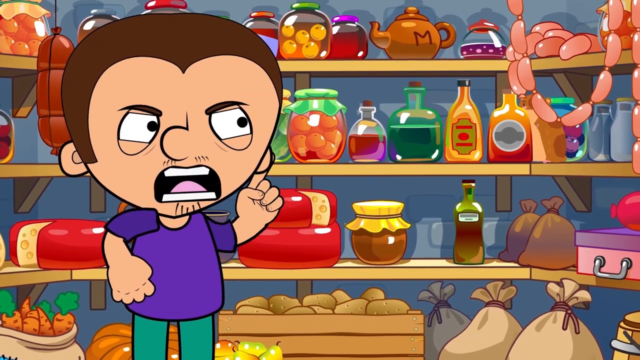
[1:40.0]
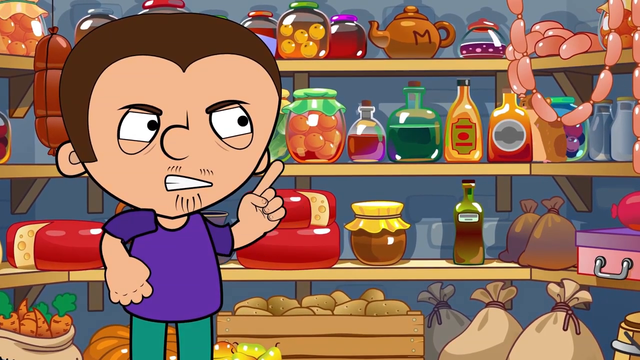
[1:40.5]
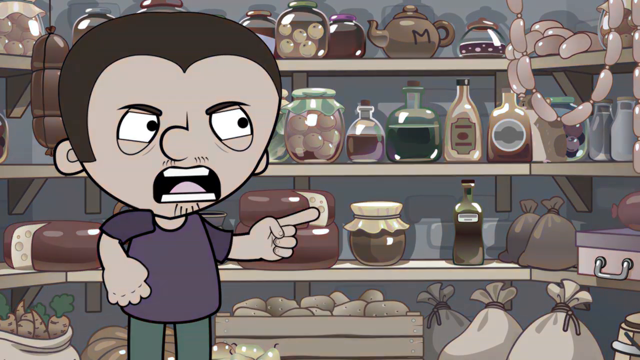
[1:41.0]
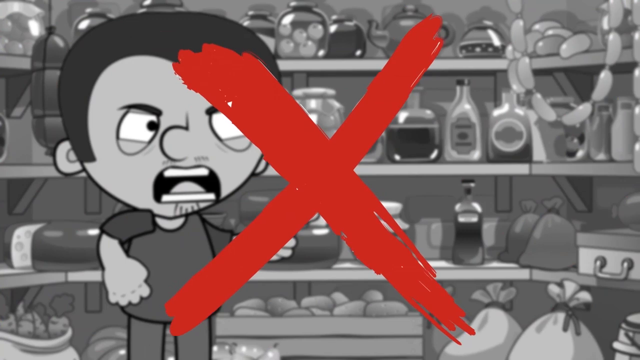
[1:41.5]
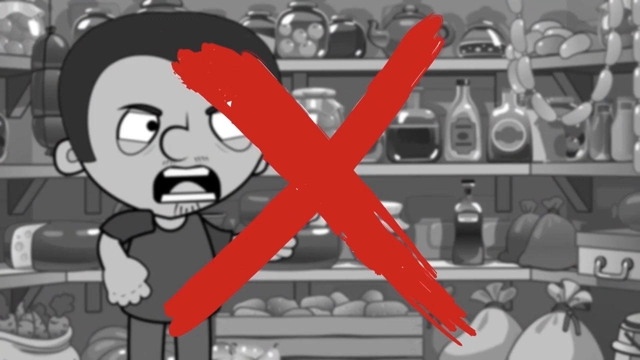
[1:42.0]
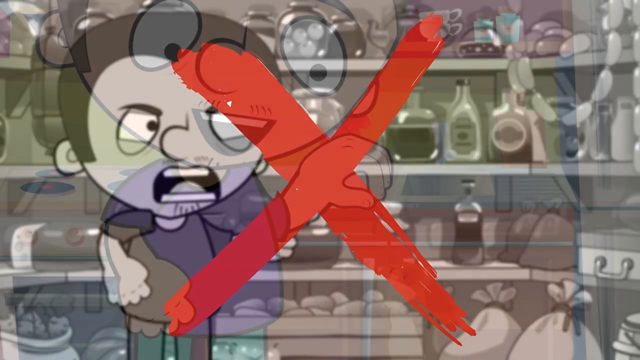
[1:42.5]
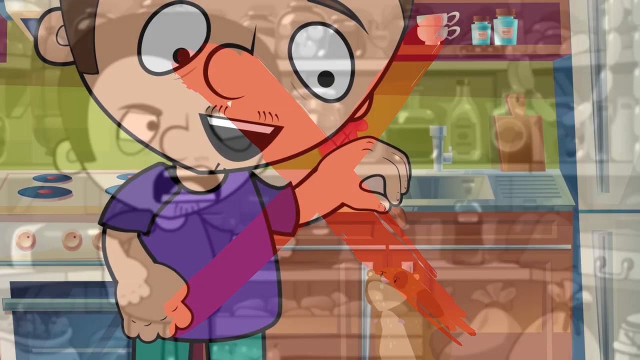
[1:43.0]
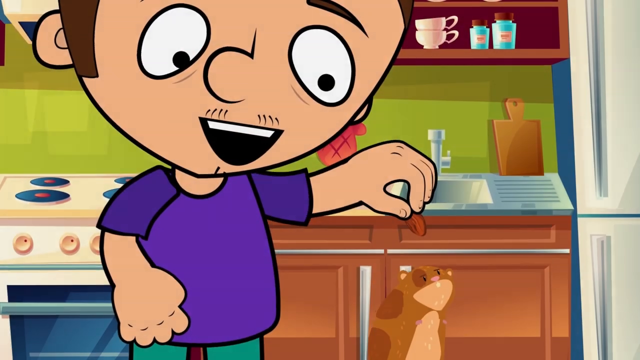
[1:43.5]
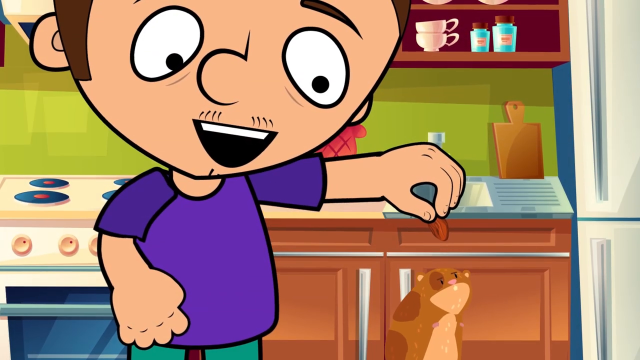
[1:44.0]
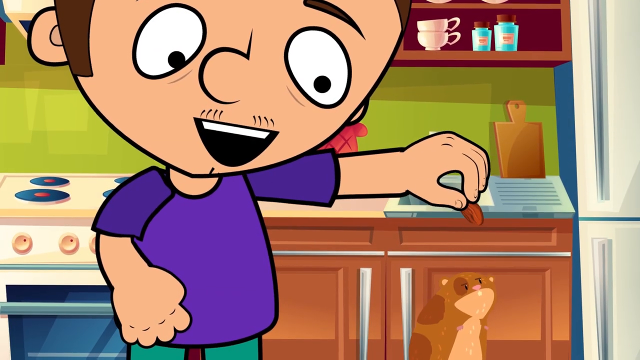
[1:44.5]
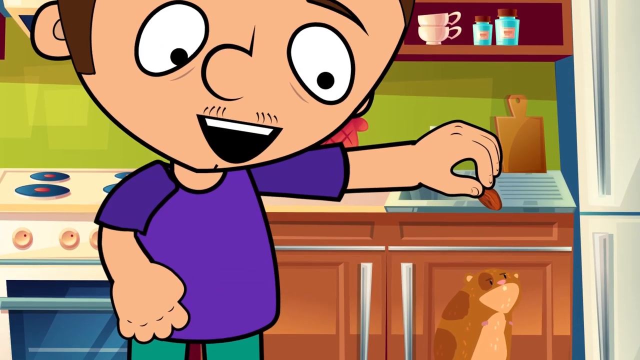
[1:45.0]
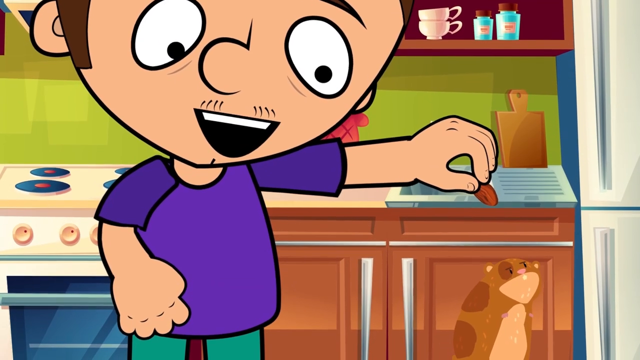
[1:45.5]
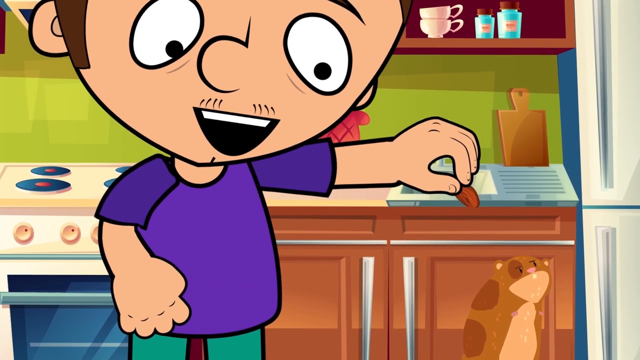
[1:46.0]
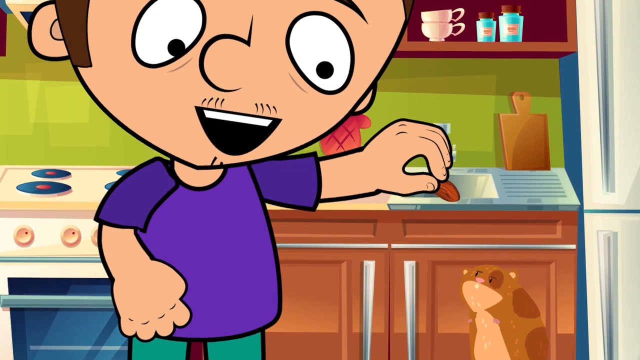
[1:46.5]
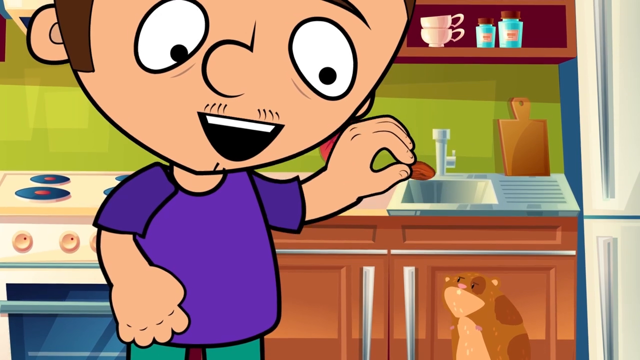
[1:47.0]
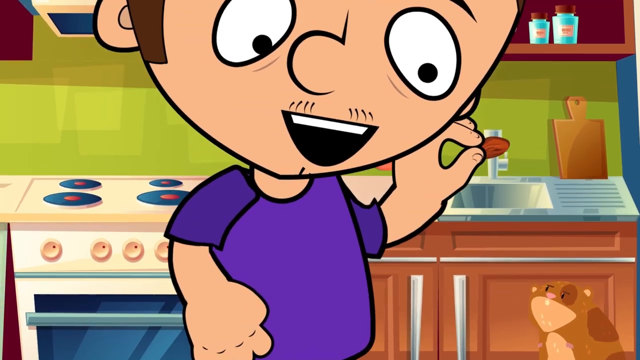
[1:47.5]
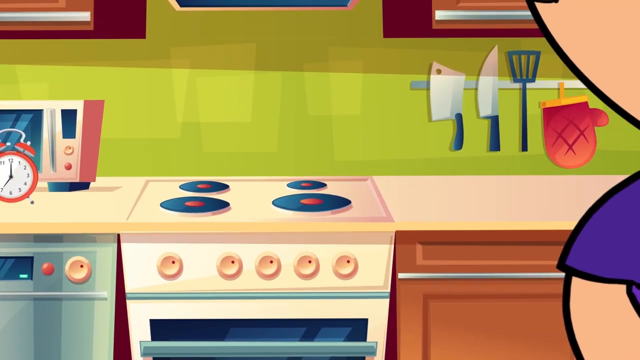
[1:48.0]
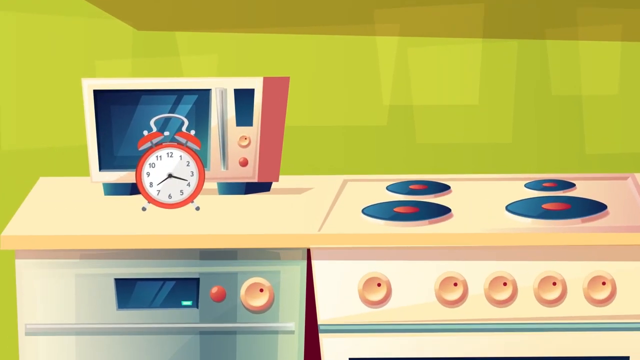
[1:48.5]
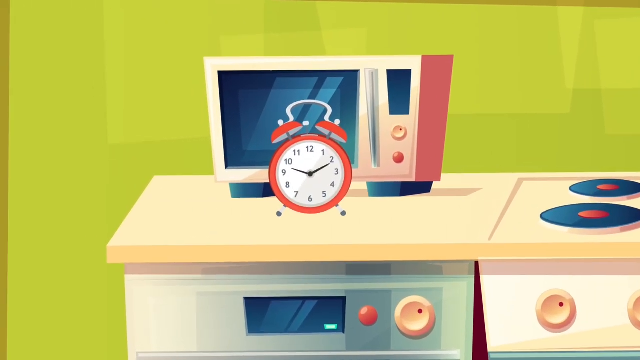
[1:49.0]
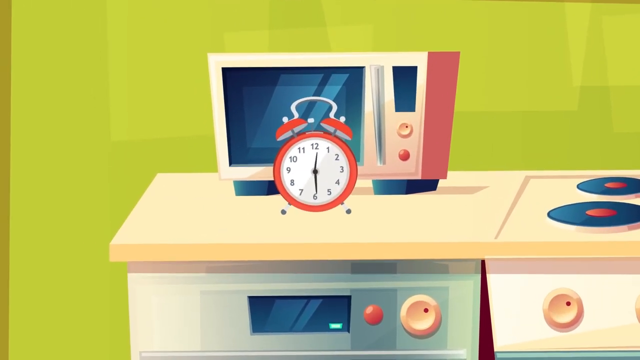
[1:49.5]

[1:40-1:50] Standing in the pantry, the male character keeps shaking his left index finger disapprovingly at the hamster while yelling something; he is clearly angry. A big red X appears on the screen. The scene cuts to the man and the hamster in the kitchen: the hamster walks back and forth in a short area while the man, smiling, holds a brown nut near him. The scene then cuts to an old-style alarm clock on the countertop in front of a microwave, and the time on the microwave rolls by very fast.